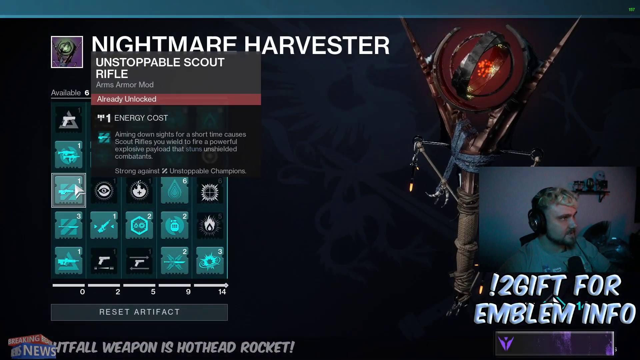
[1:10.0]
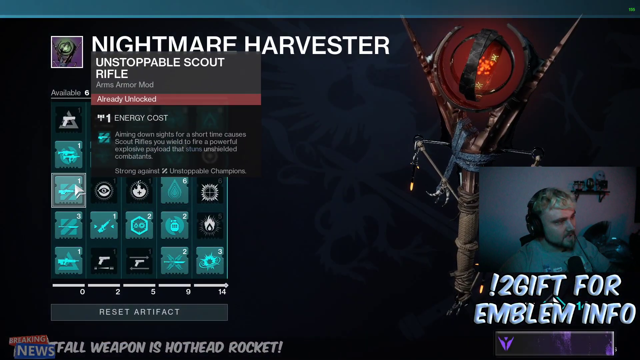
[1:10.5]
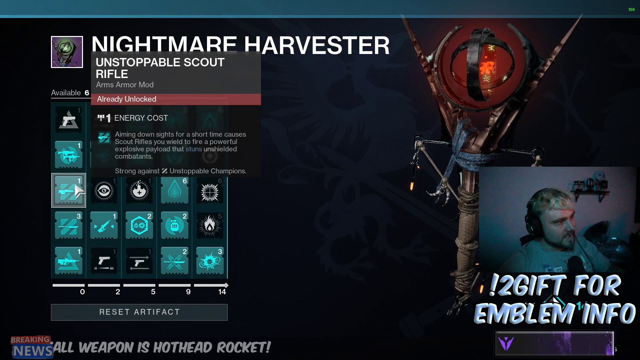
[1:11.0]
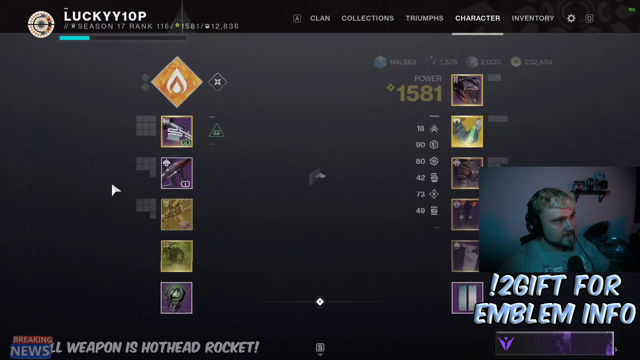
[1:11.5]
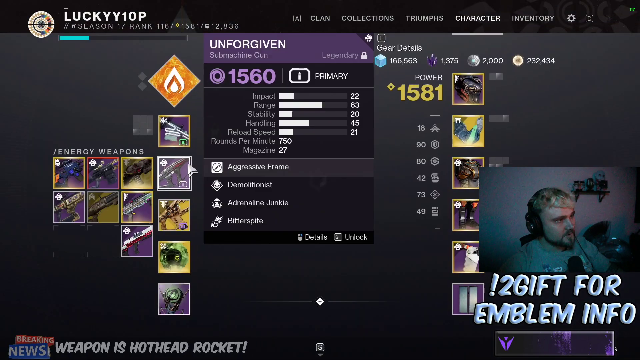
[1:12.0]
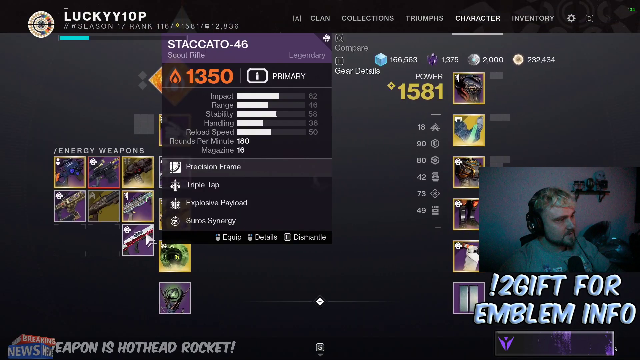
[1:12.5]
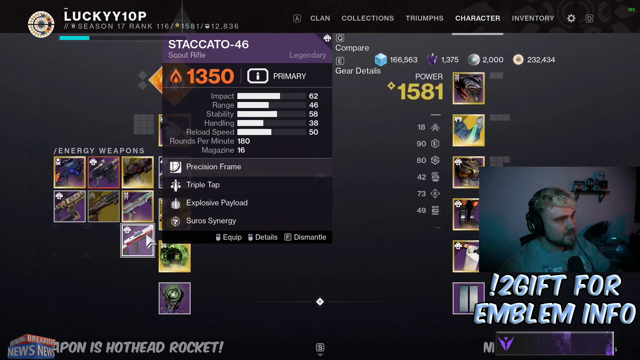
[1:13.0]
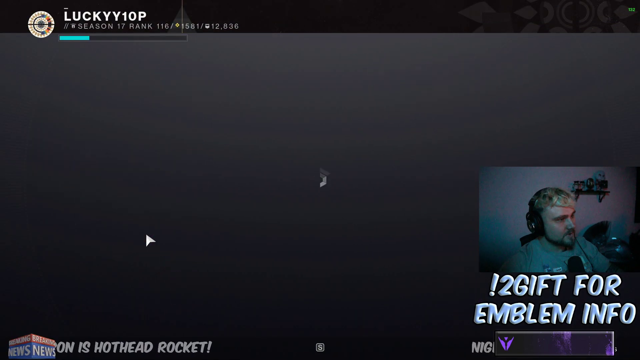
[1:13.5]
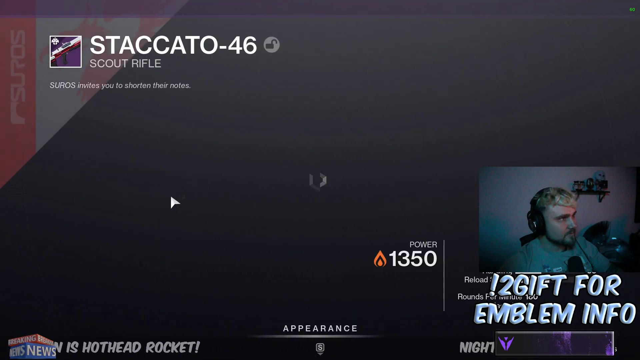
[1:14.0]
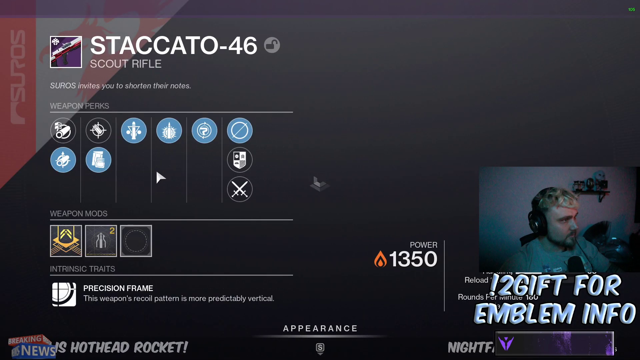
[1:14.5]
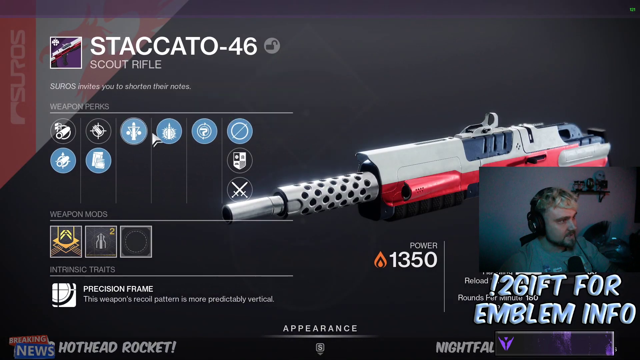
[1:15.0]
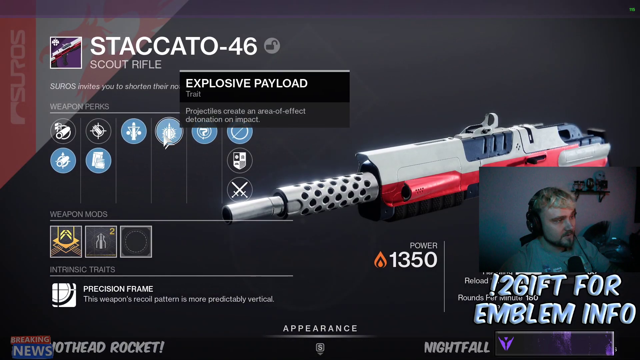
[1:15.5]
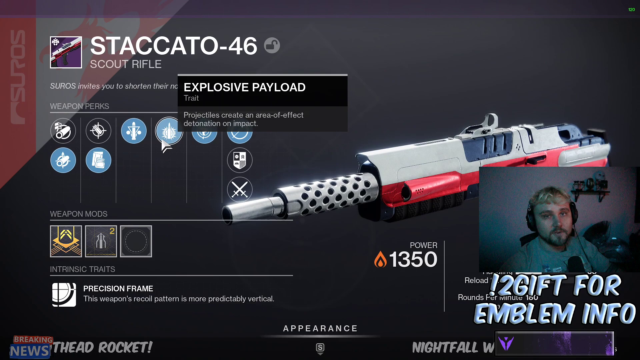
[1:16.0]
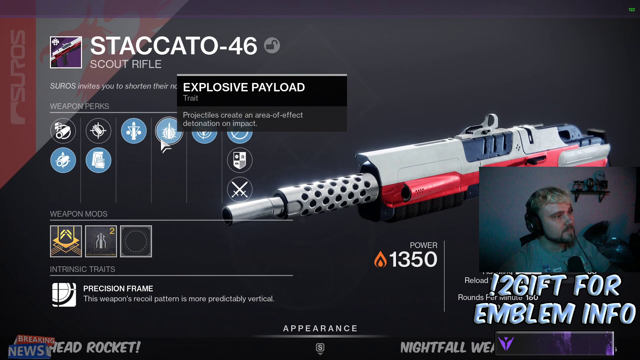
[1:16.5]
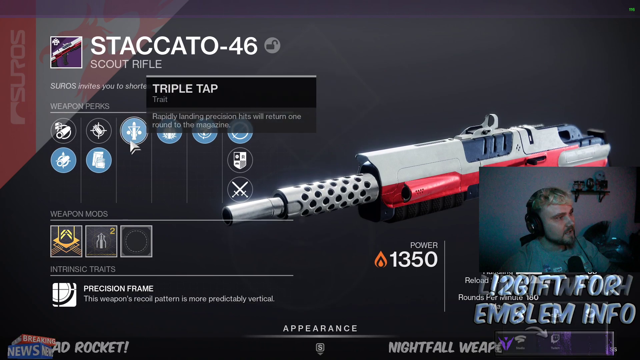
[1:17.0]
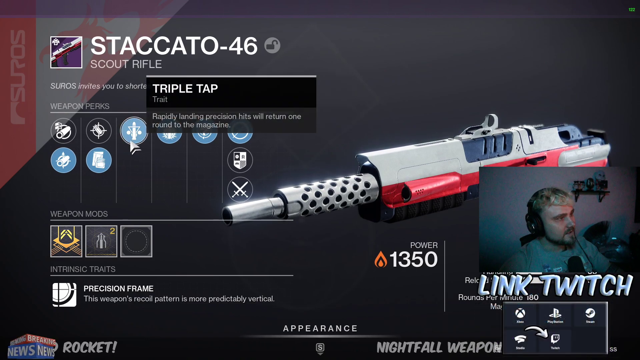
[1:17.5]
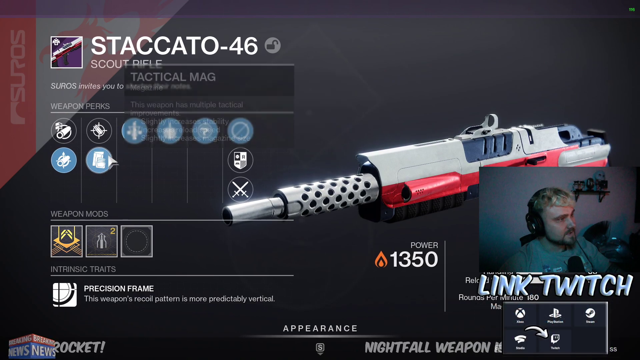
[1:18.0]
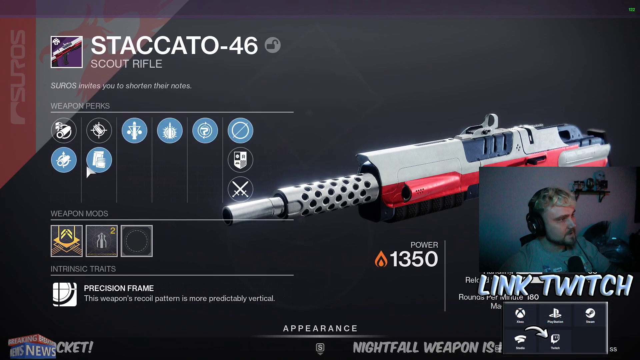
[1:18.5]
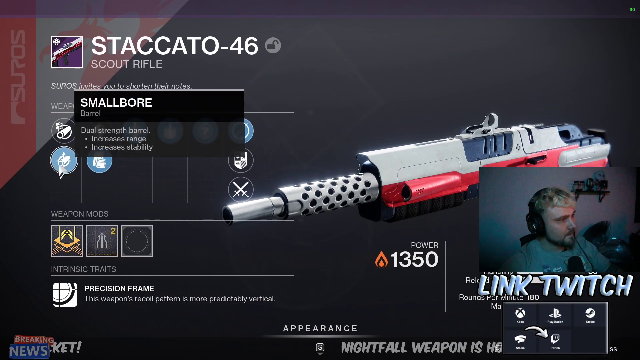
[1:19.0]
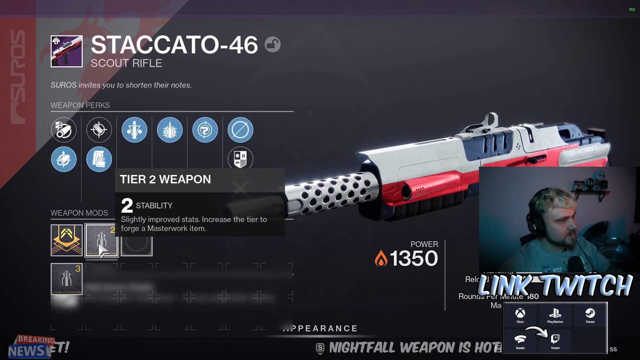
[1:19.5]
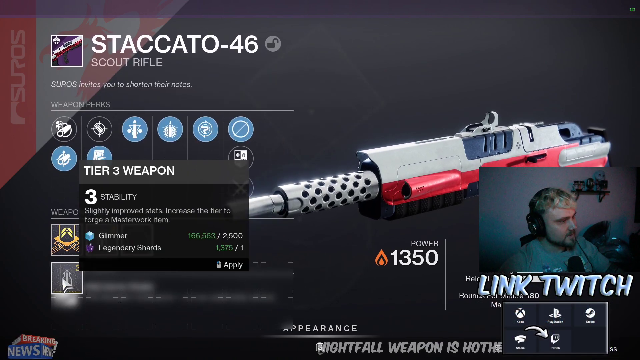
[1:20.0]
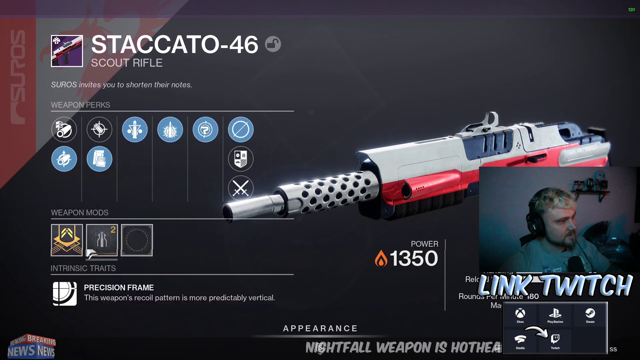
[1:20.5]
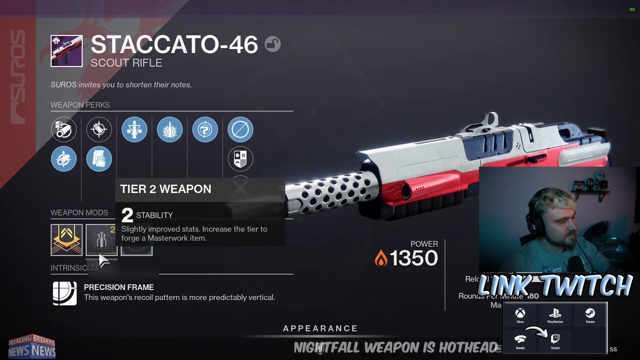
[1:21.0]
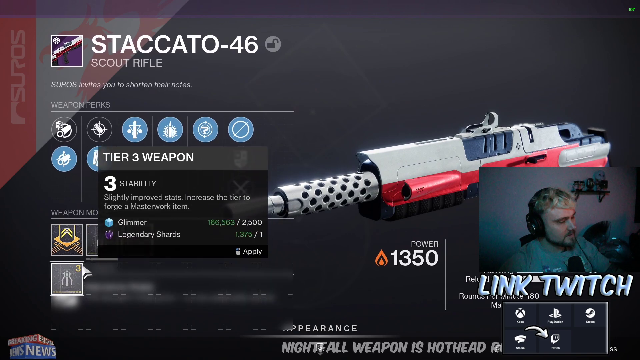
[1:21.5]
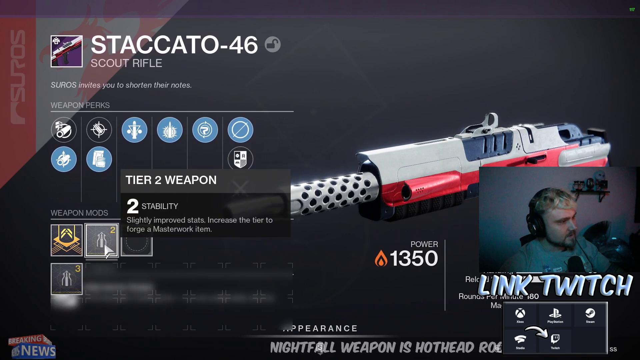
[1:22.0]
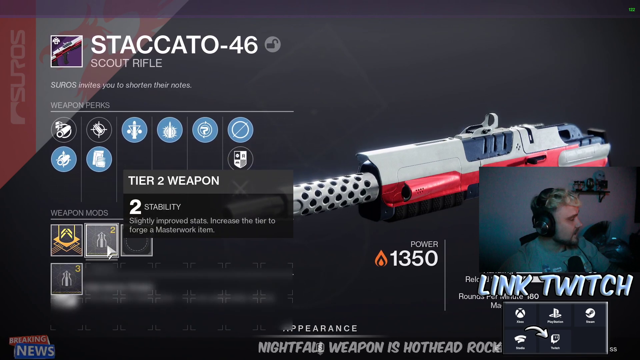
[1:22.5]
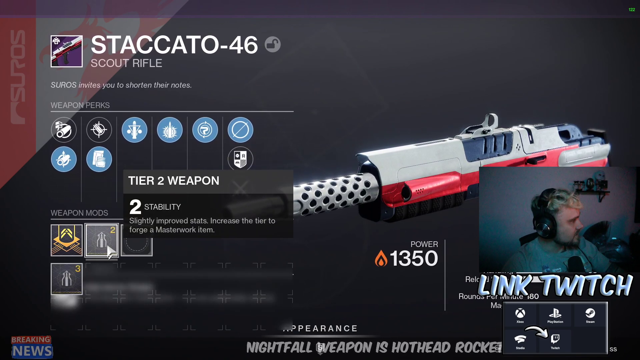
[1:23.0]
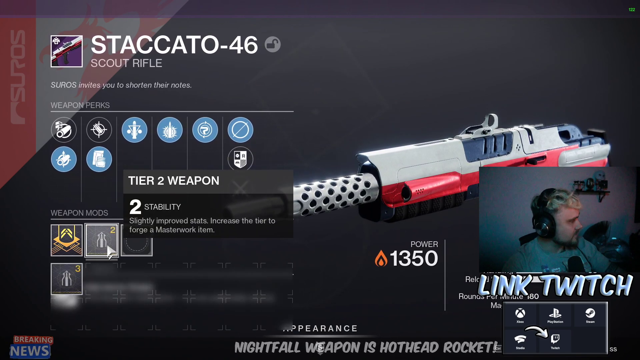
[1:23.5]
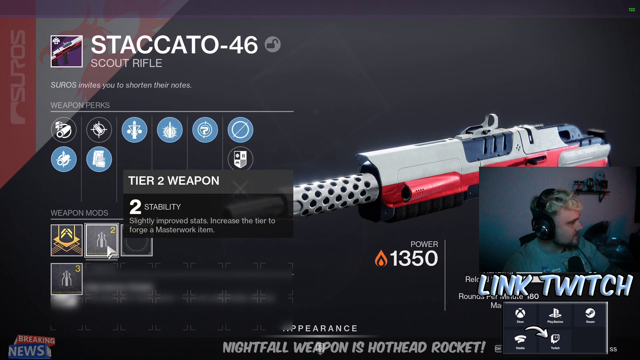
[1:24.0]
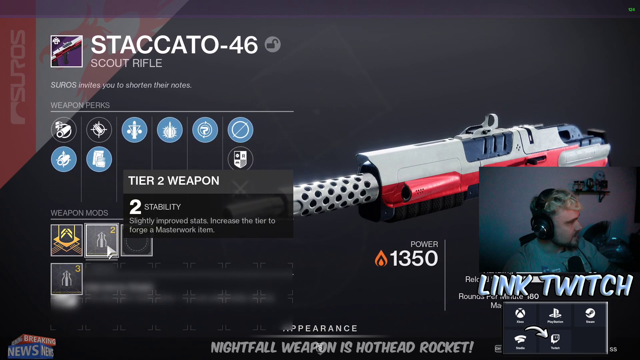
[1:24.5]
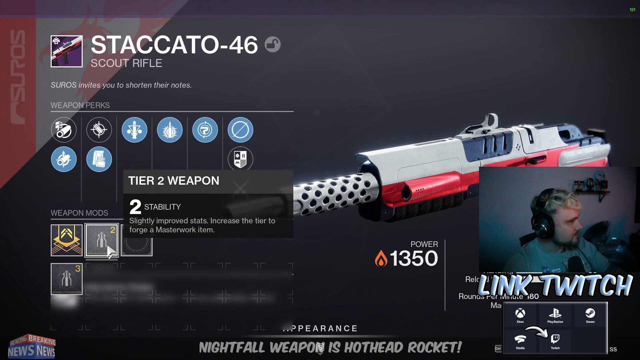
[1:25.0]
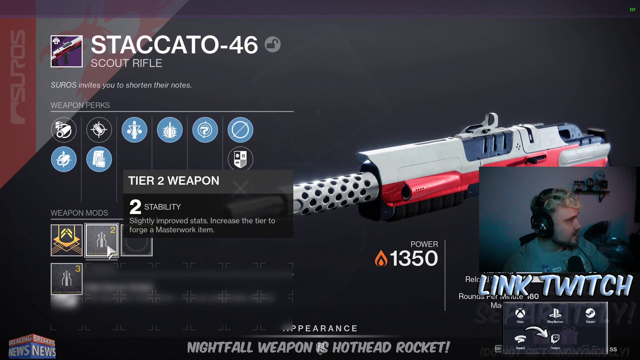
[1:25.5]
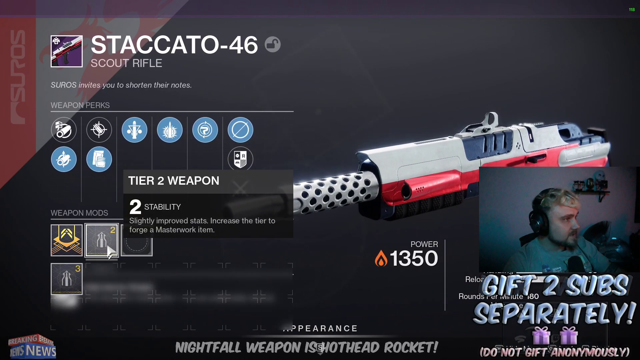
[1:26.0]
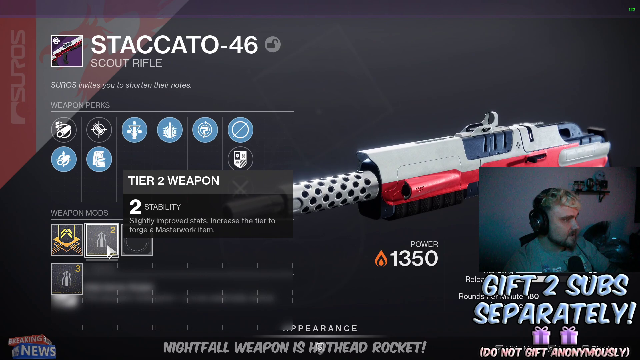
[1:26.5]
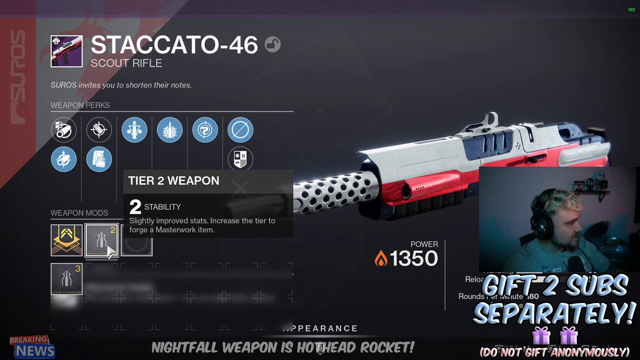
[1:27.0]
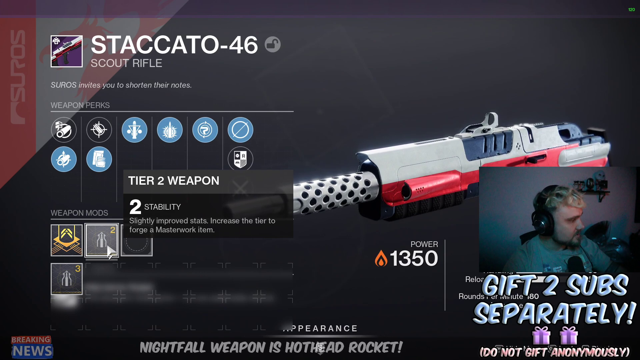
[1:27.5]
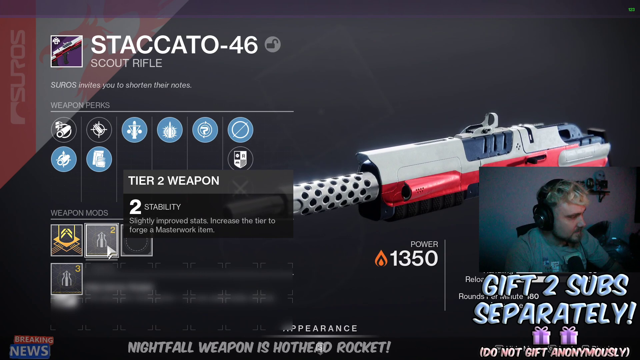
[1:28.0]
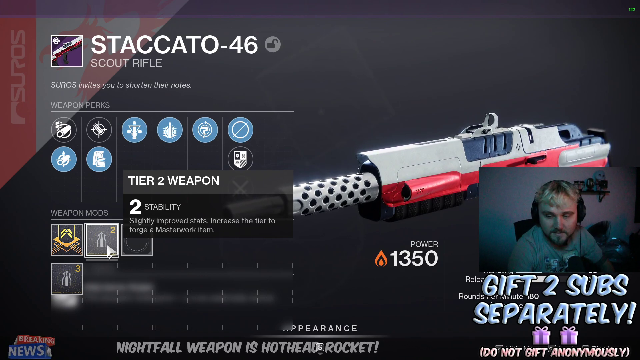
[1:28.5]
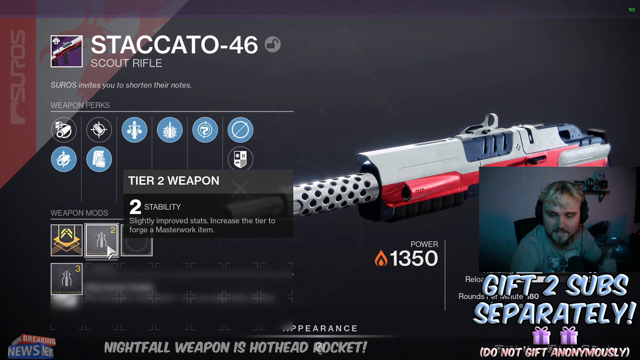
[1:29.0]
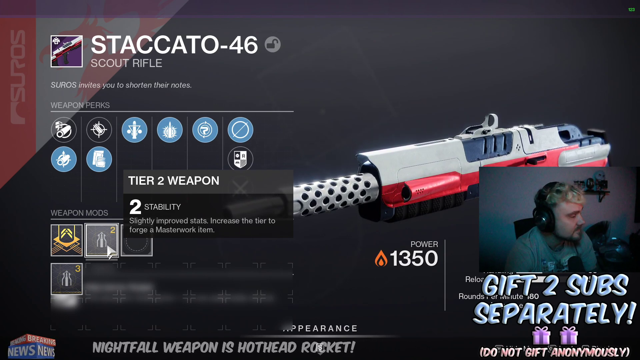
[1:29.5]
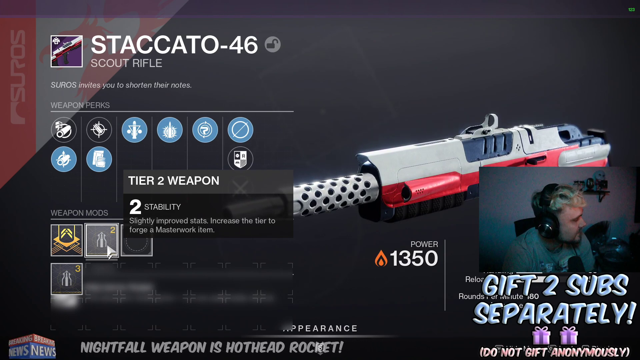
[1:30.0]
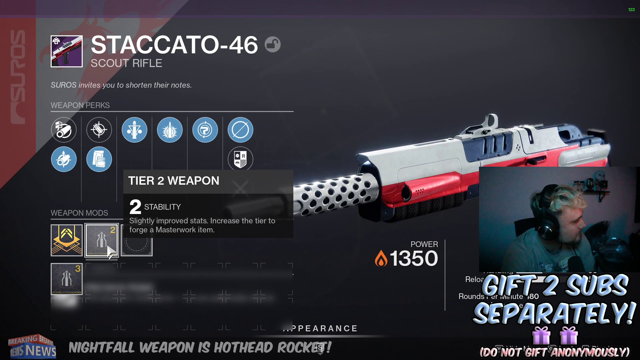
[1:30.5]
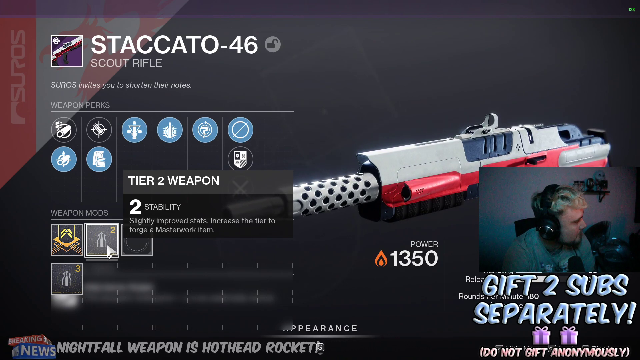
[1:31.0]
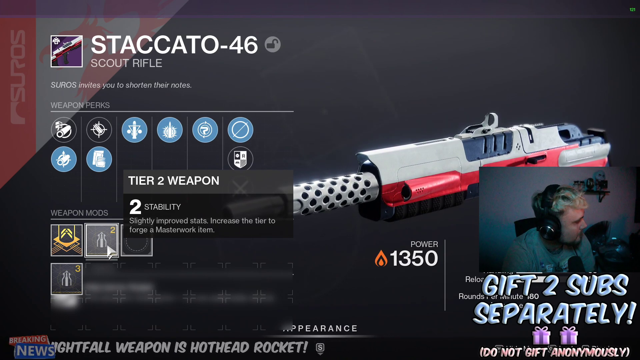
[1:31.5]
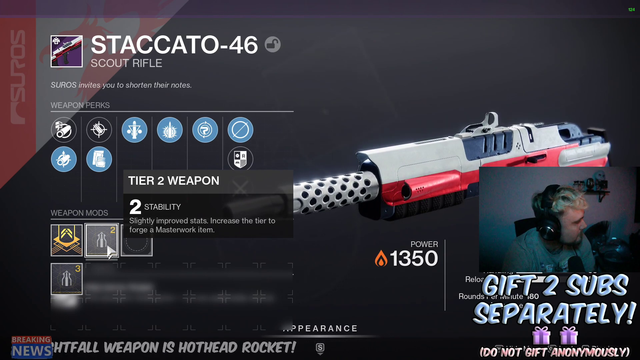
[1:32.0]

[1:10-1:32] The screen appears to start on a Nightmare Harvester, and then the streamer opens another loadout. He points toward different perks and then looks at the weapon mods; it looks like he either removed some or is explaining one. He hovers over an icon that reads "Tier 2 Weapon, 2 Stability". He goes back to the screen that says "Nightmare Harvester". On the right-hand side is something kind of like a wooden torch with two prongs, like an antenna, sticking up at left and right angles. In the center is what looks like a dark red ball with orange spheres inside. On the left are 10 light blue square icons with different pictures in the middle and various numbers, which seem to have different meanings. At the top it says "Unstoppable Scout Rifle", underneath that "Arms Armor Mod", and below that, in a red line, "Already Unlocked".